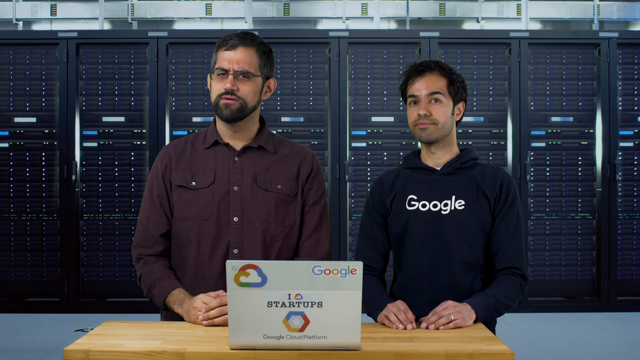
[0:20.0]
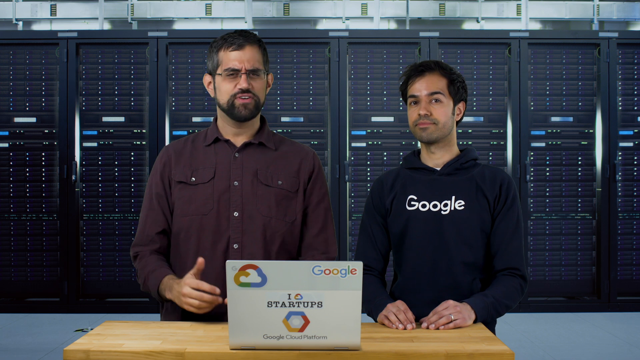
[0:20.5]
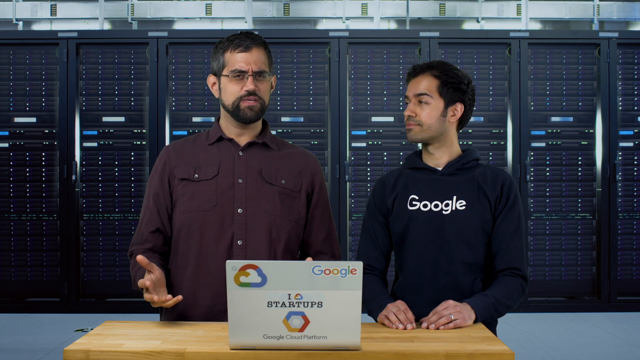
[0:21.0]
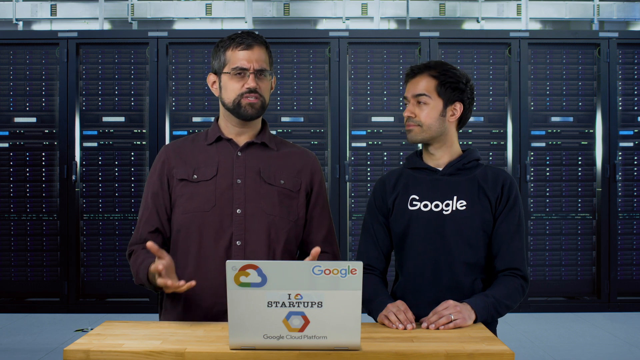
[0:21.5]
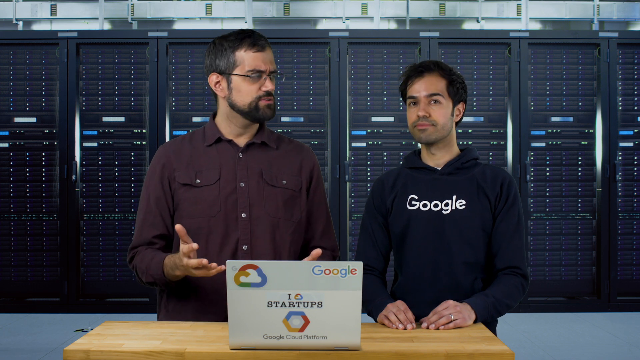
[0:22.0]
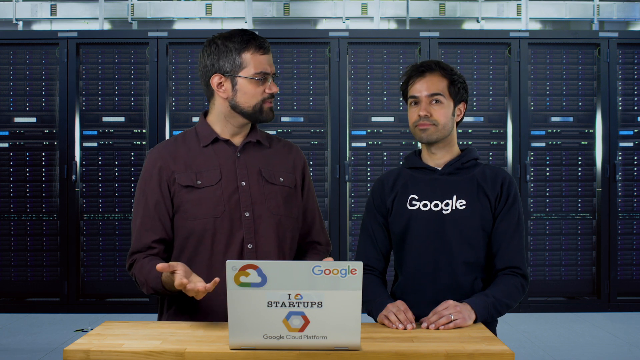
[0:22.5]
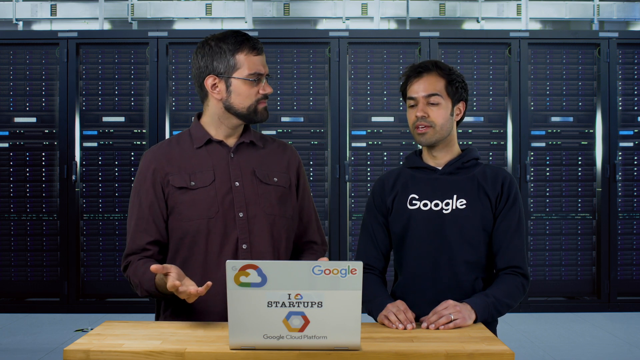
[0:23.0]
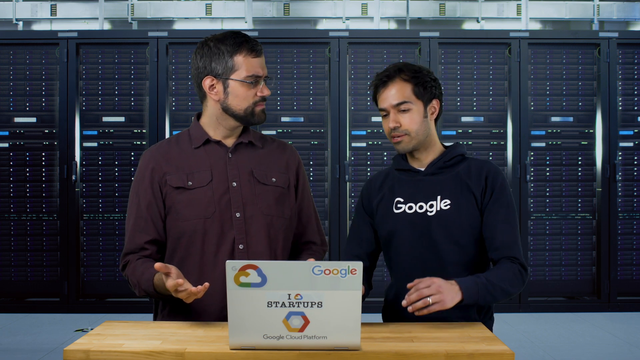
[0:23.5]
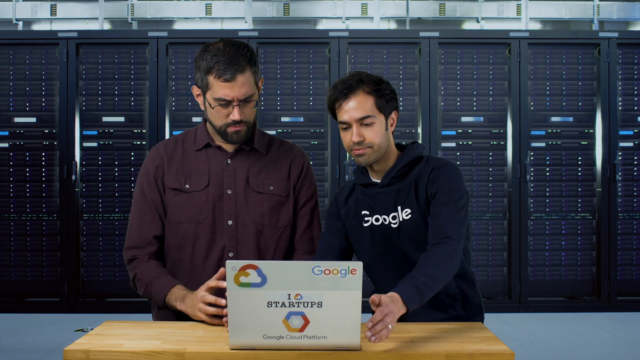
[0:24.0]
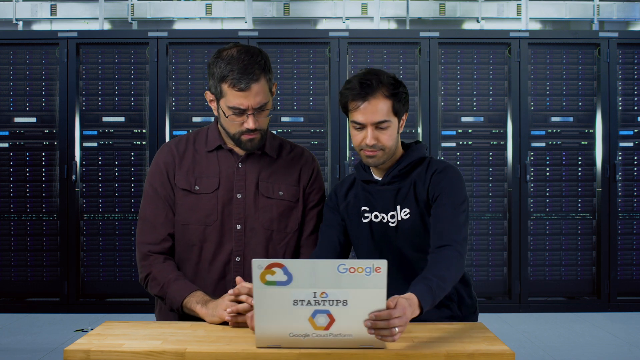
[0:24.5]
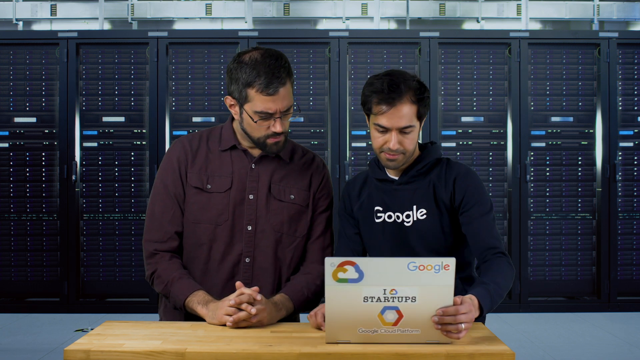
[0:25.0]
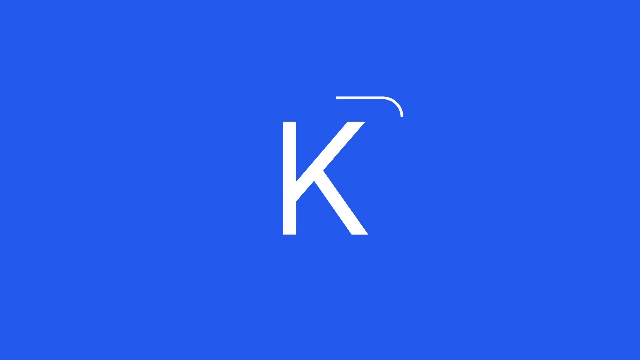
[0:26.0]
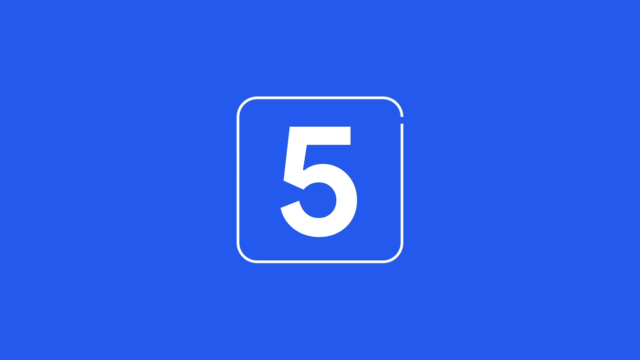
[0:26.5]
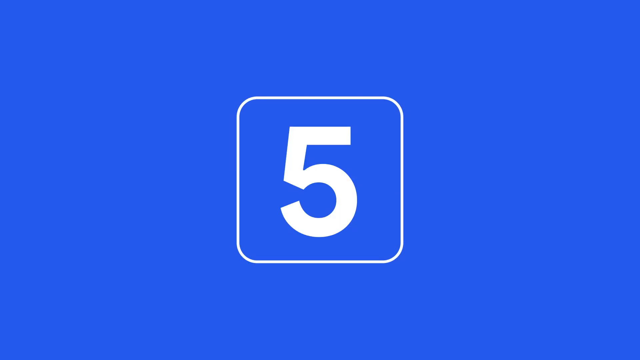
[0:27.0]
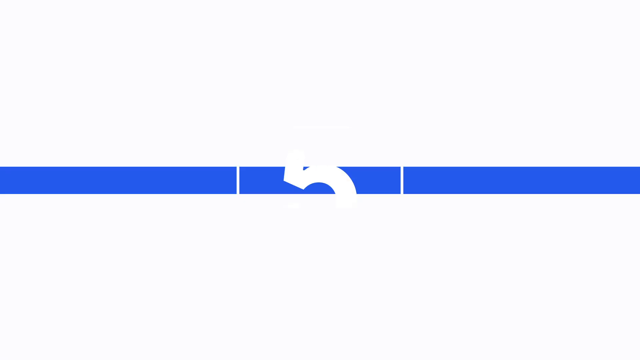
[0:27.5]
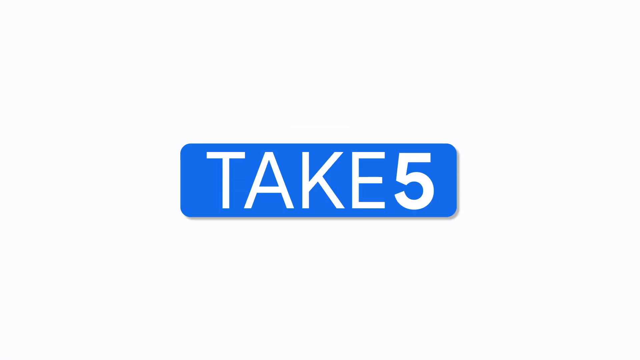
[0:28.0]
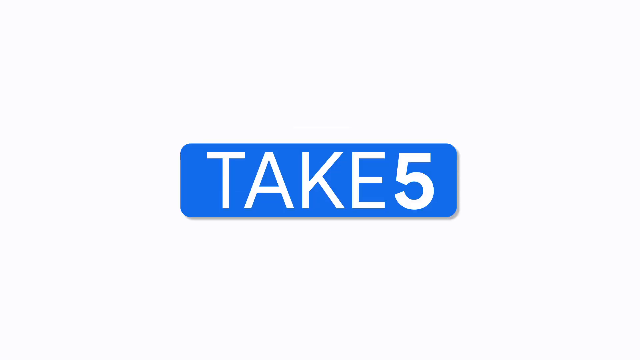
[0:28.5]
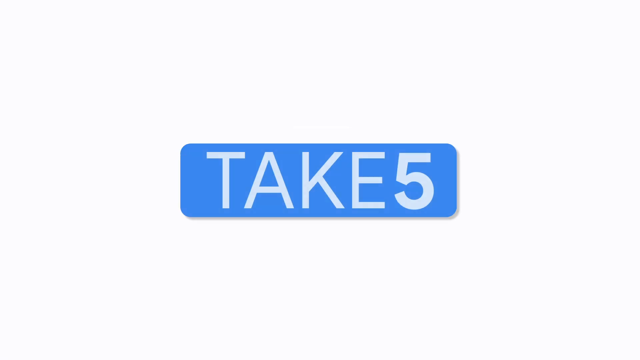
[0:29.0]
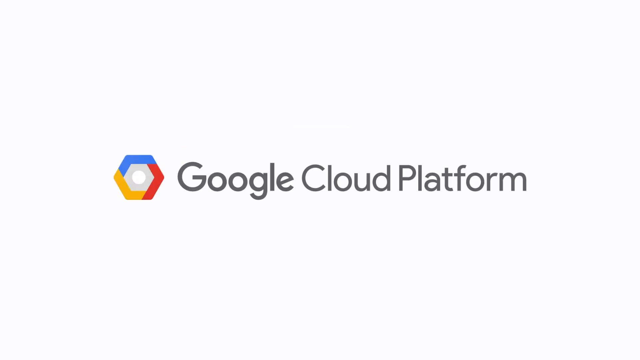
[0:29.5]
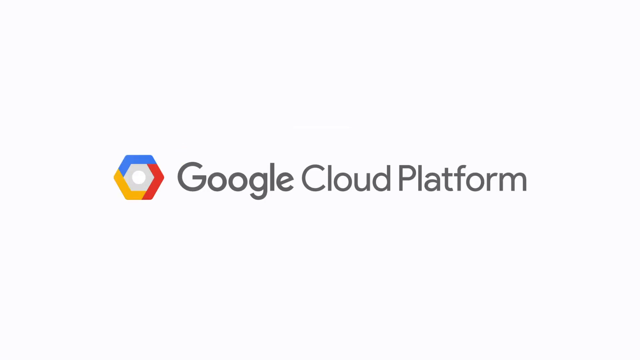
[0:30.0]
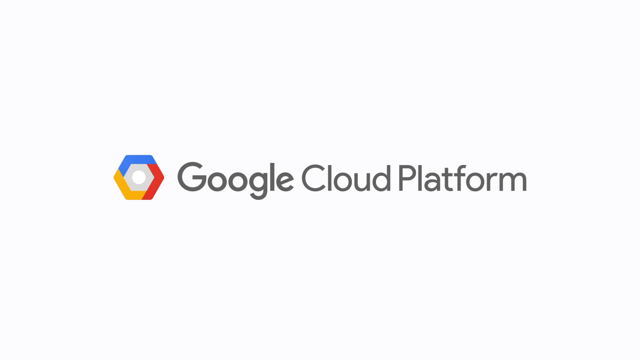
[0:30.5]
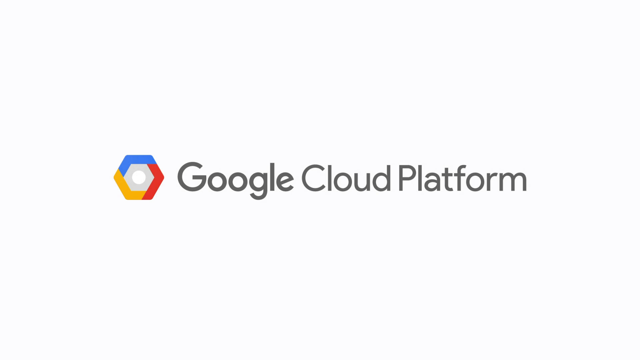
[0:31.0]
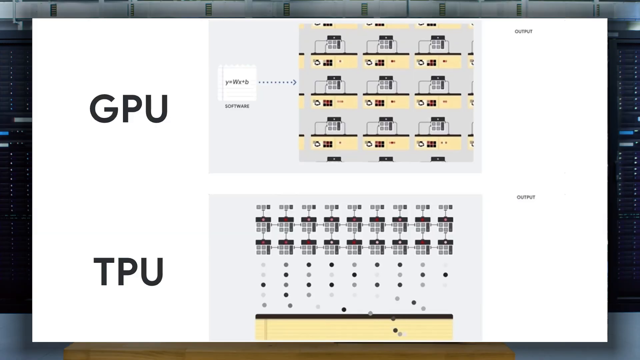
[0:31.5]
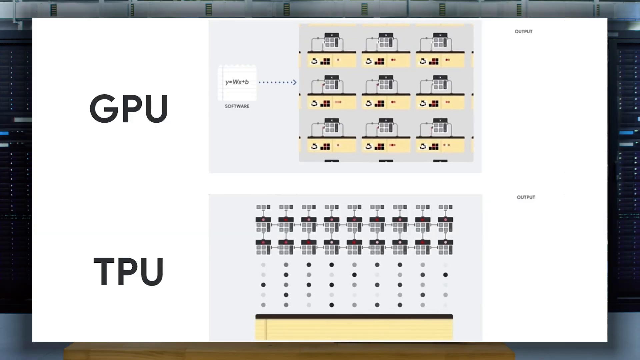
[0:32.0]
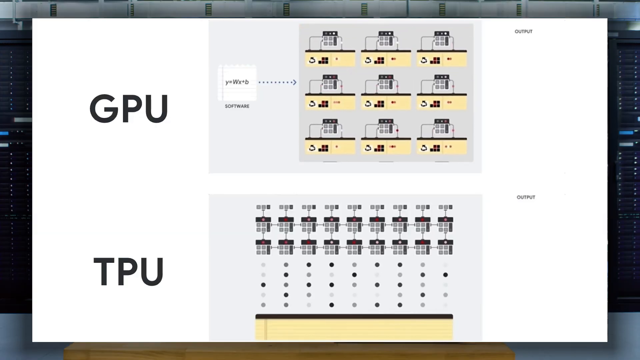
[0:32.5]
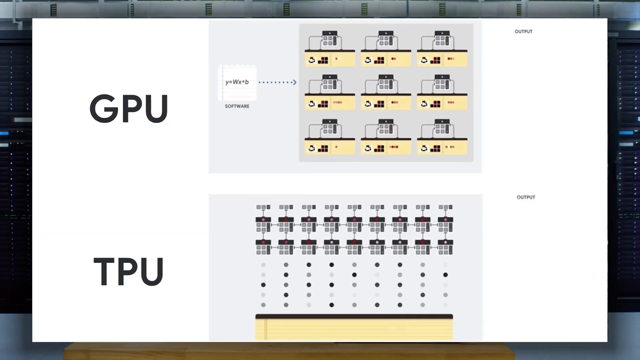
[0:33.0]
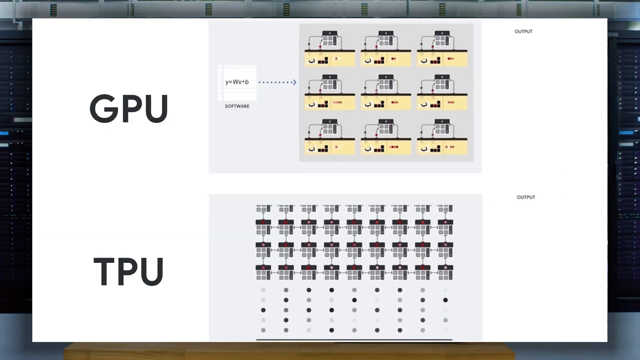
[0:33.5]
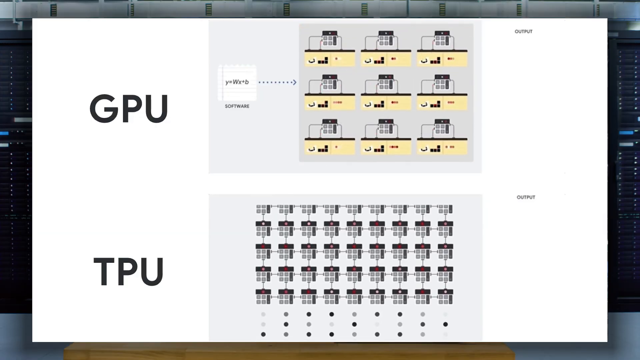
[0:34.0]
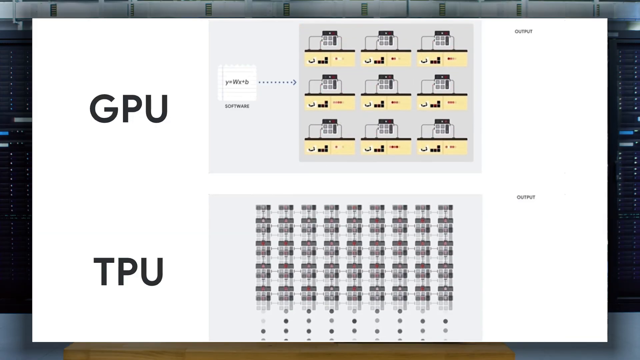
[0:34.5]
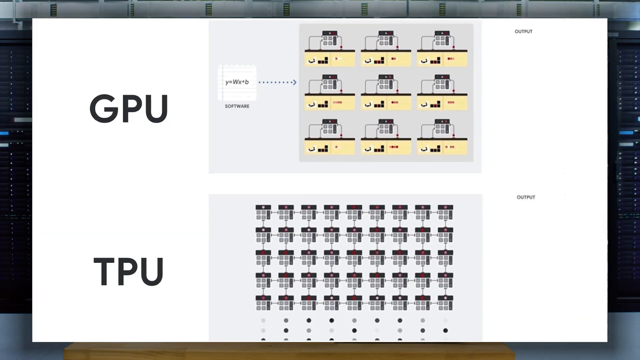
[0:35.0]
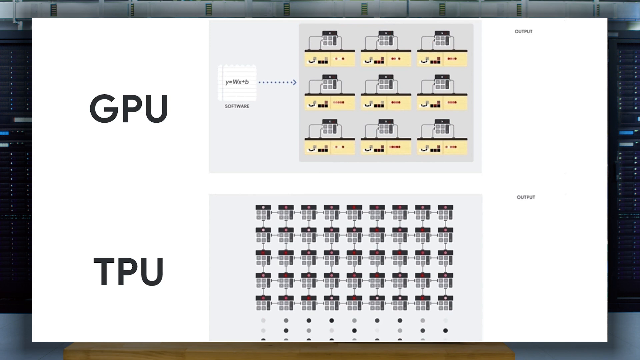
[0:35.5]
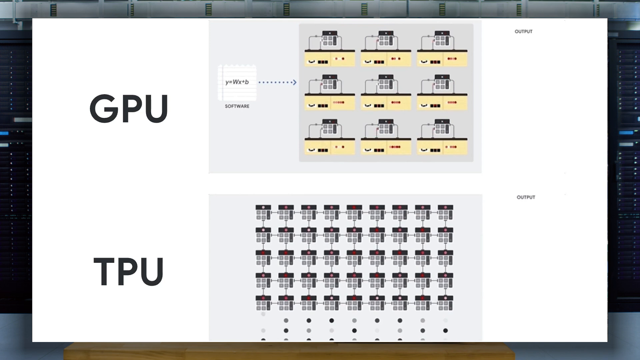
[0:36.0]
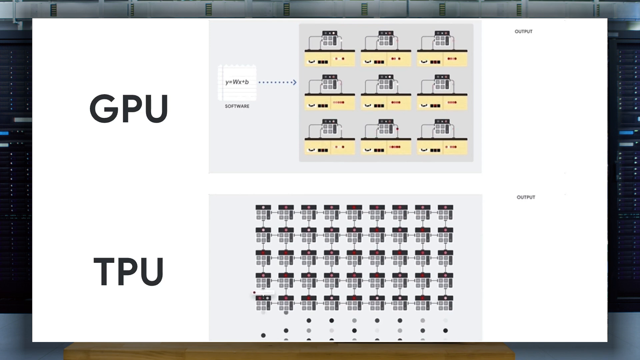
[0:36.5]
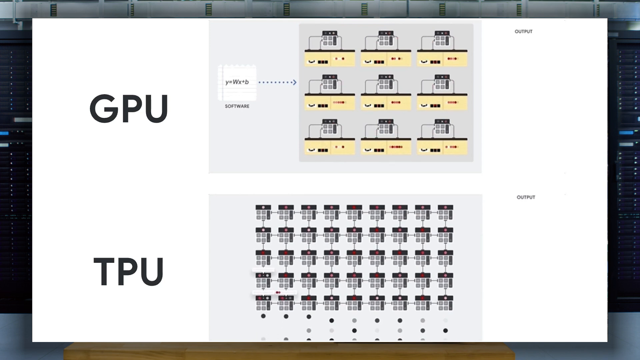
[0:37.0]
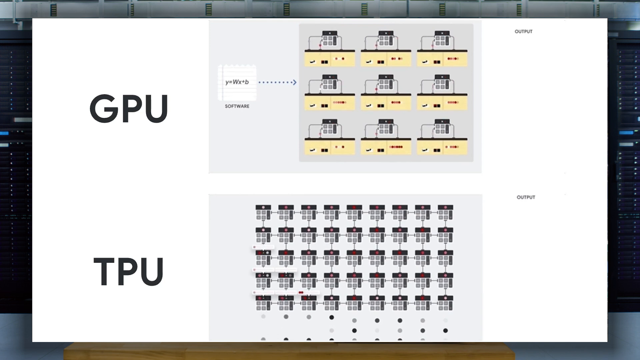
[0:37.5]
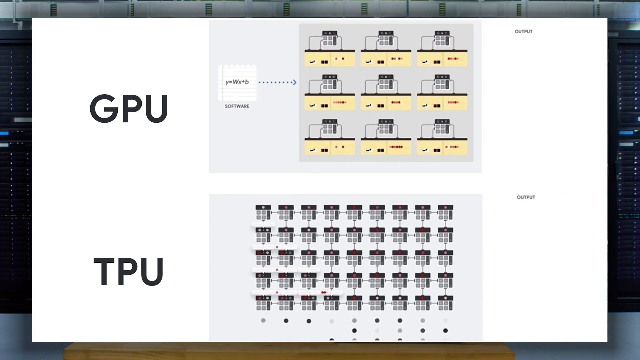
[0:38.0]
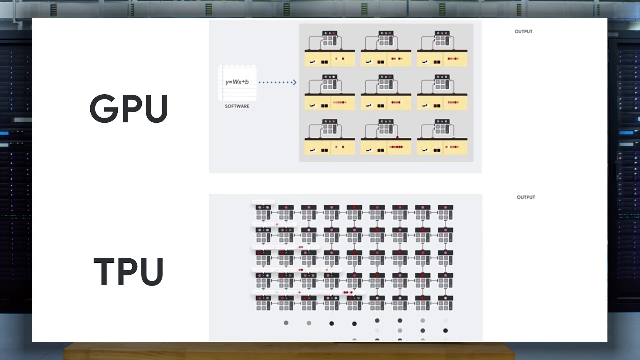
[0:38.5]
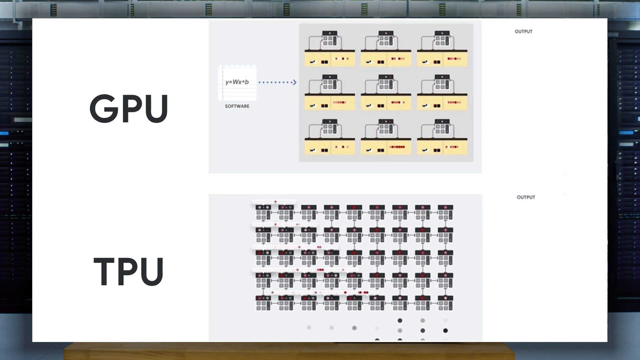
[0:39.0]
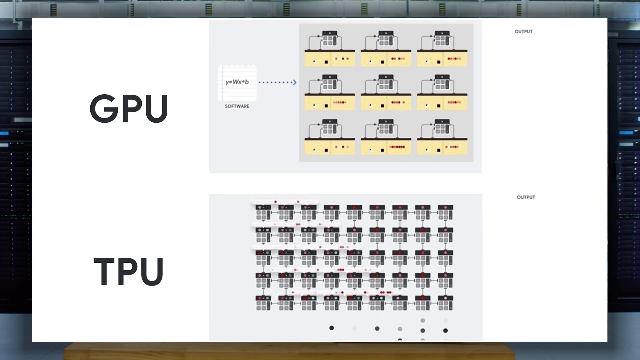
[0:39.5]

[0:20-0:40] The two men, who possibly work for Google, stand at a table with their hands on it. The person on the left starts talking as if elaborating on something, hands out a little, looking at the other man. The other man then talks and grabs the computer, and "take five" appears. The view moves in front of the screen, where "take five" is the heading and a presentation seems to begin. Small graphics labeled GPU and TPU appear to illustrate the difference between the two, and the view scrolls down to show how they work. They look like little miniature factories: each group has what seem to be small projectile balls going in and out of certain areas and being passed along, for both the GPU and the TPU, though the process happens differently in each.